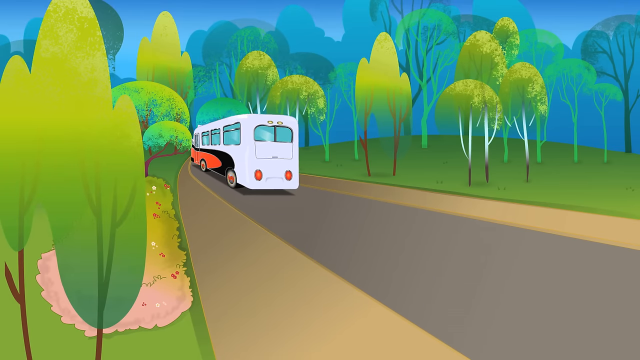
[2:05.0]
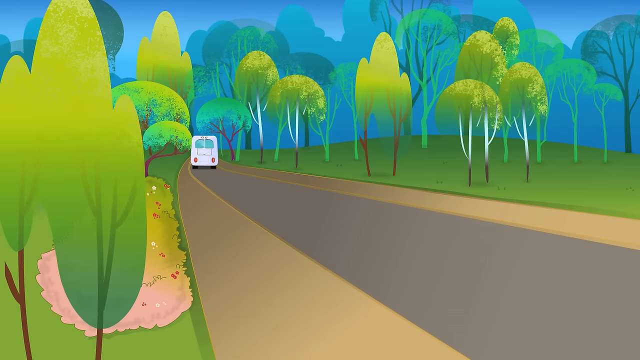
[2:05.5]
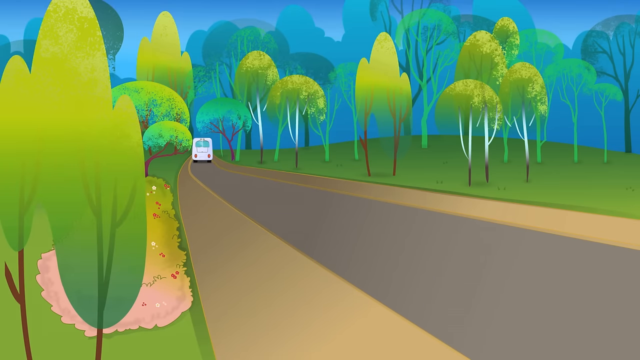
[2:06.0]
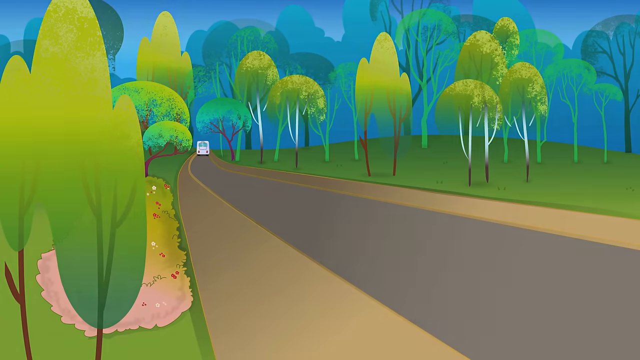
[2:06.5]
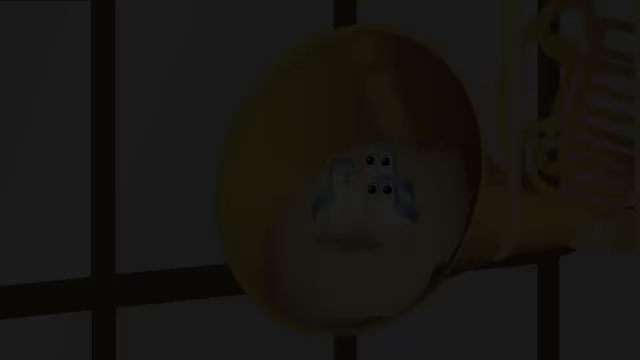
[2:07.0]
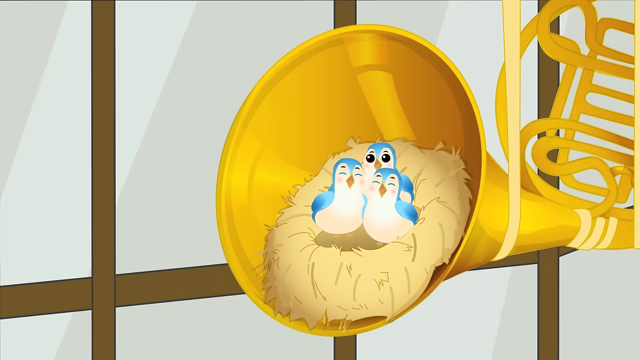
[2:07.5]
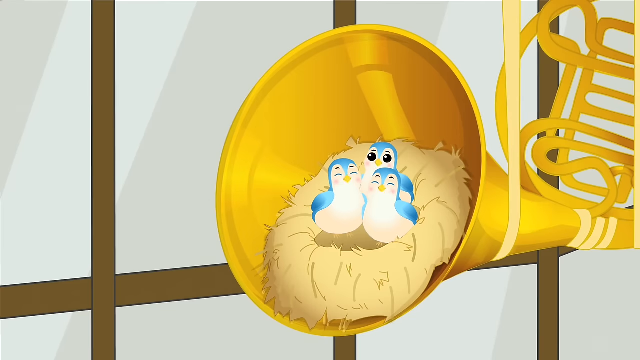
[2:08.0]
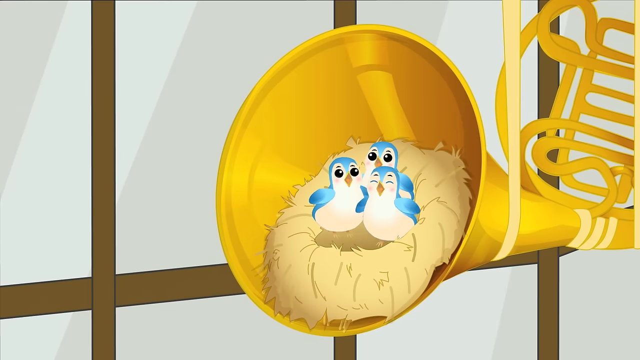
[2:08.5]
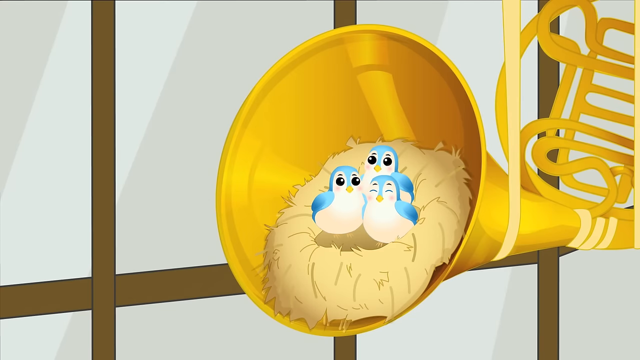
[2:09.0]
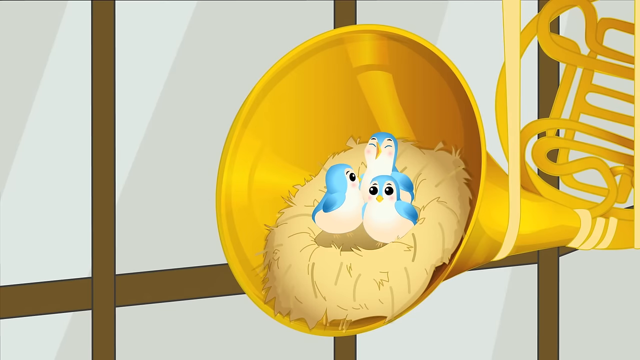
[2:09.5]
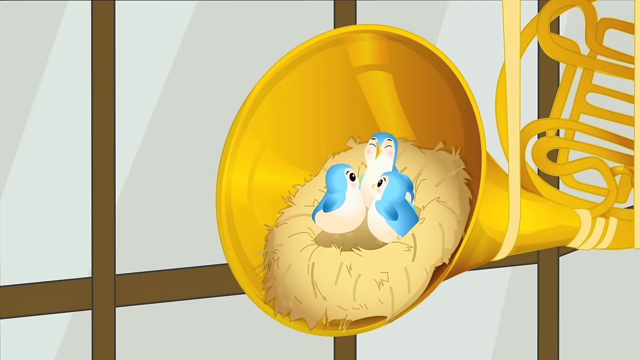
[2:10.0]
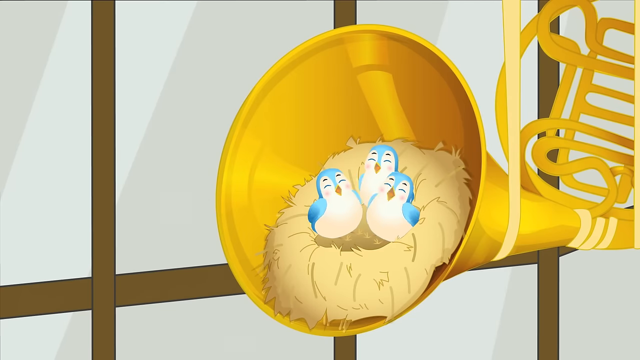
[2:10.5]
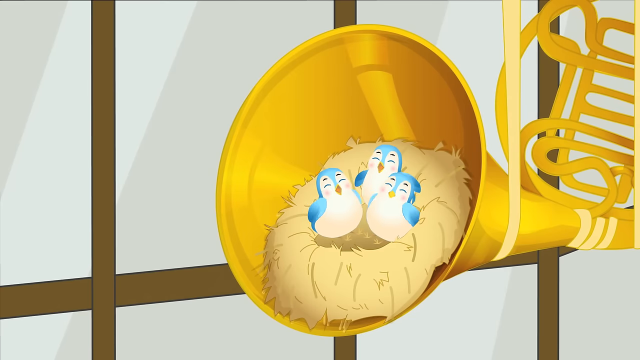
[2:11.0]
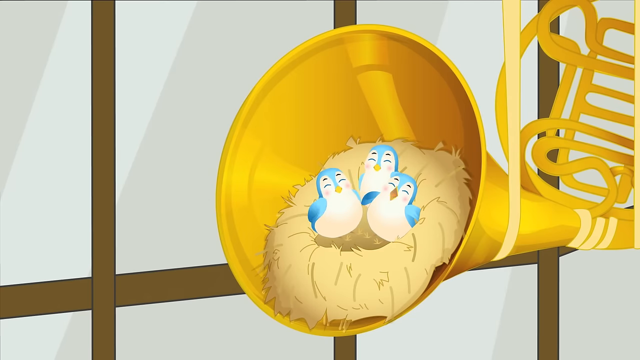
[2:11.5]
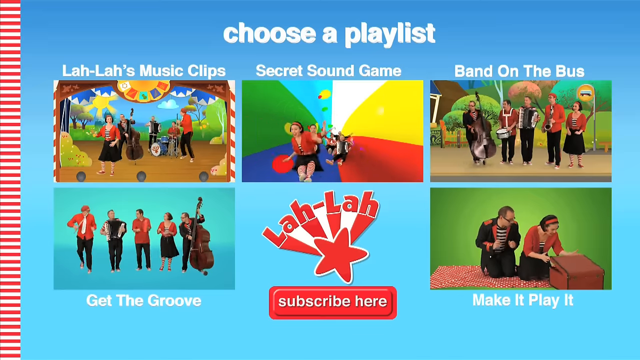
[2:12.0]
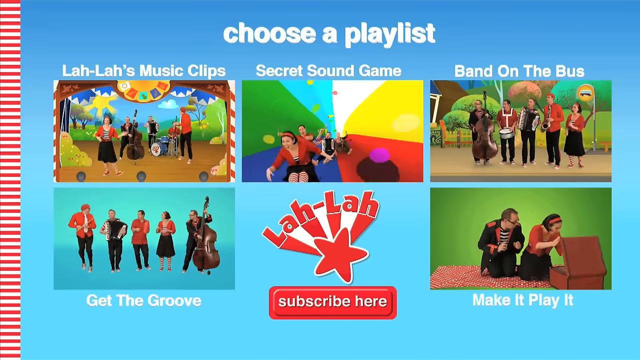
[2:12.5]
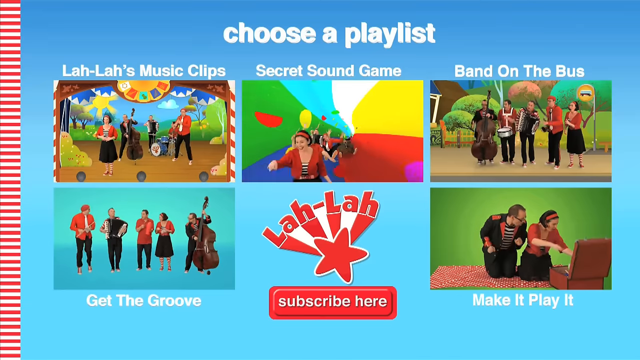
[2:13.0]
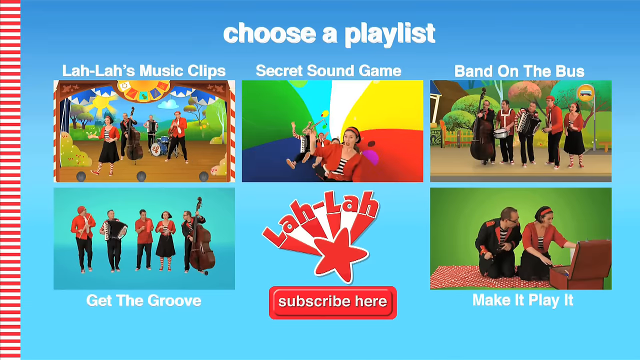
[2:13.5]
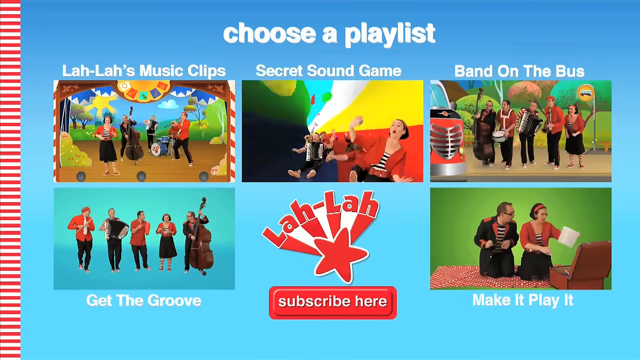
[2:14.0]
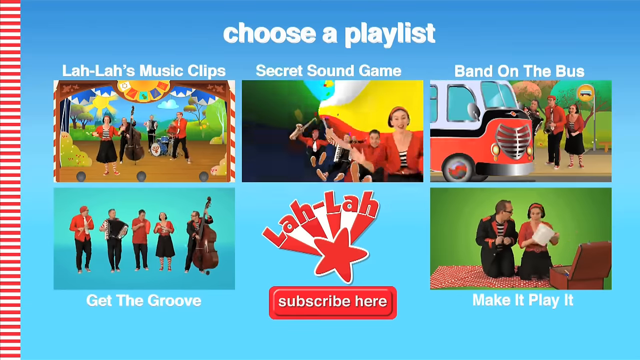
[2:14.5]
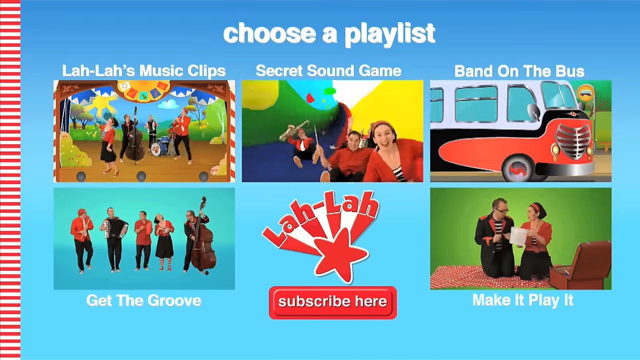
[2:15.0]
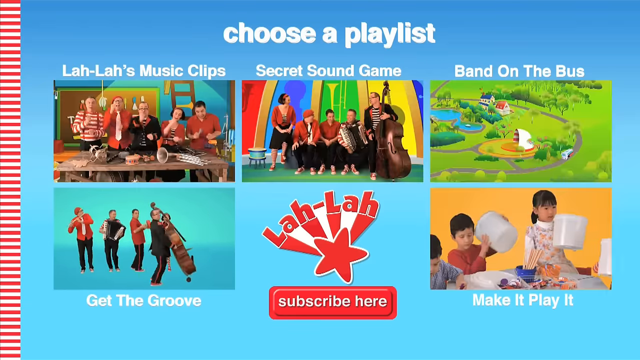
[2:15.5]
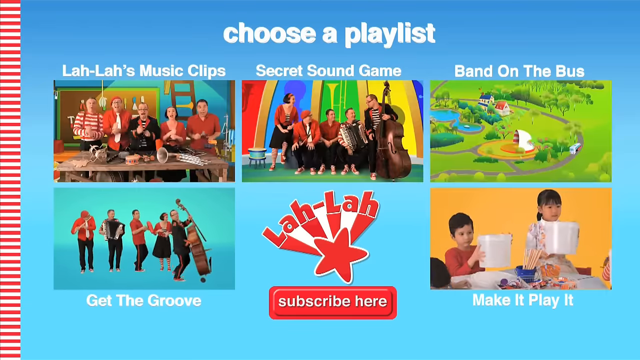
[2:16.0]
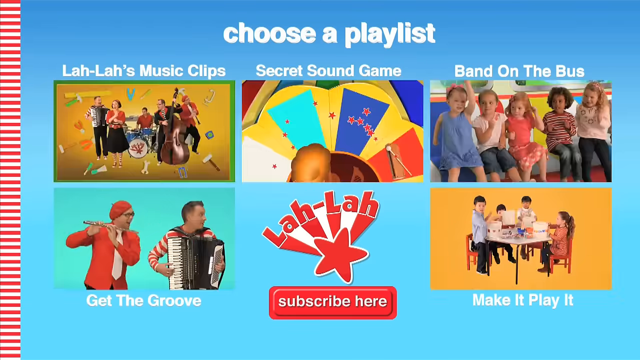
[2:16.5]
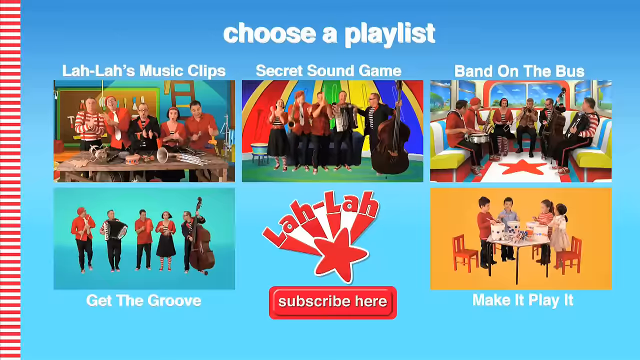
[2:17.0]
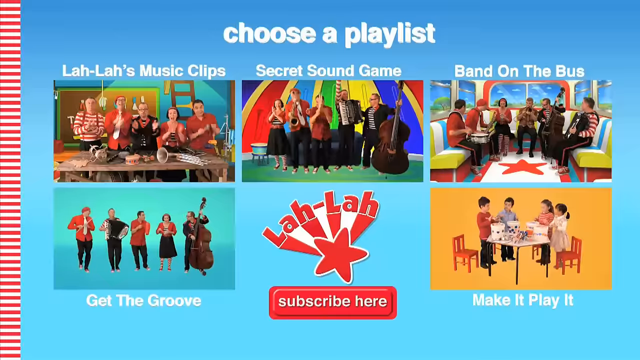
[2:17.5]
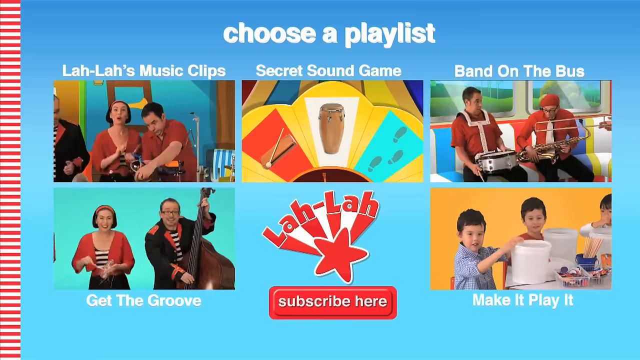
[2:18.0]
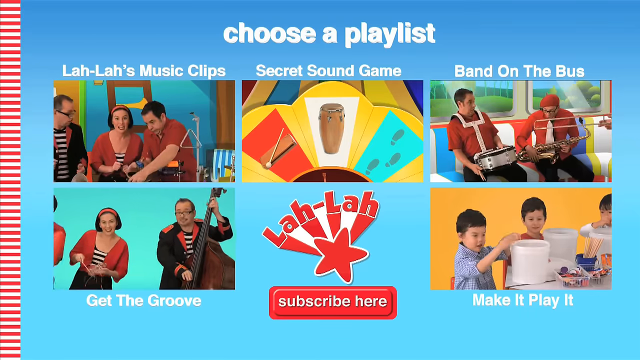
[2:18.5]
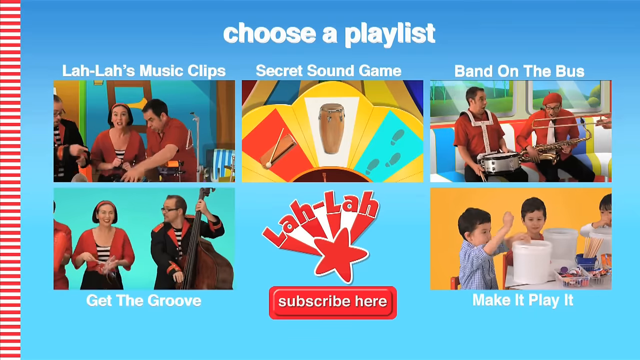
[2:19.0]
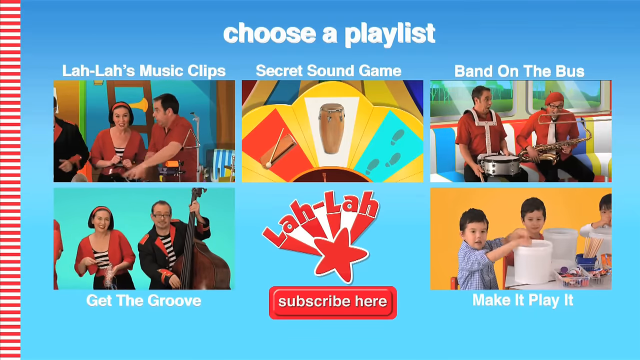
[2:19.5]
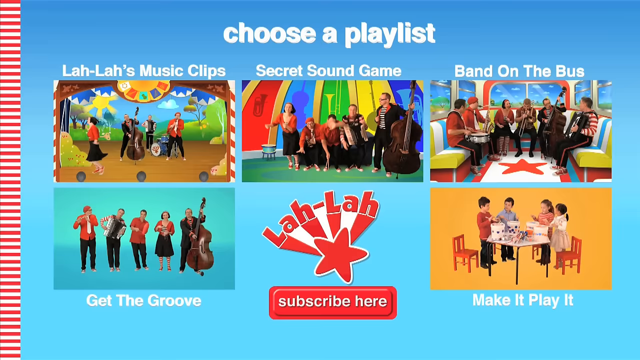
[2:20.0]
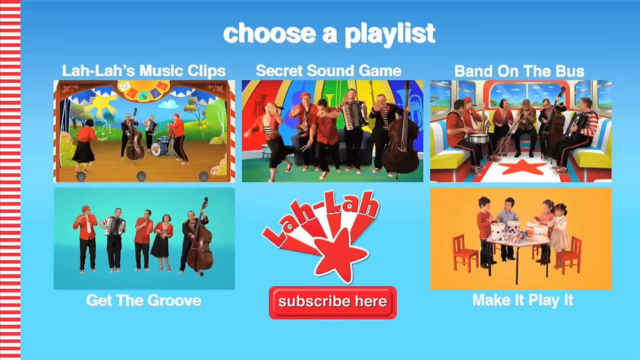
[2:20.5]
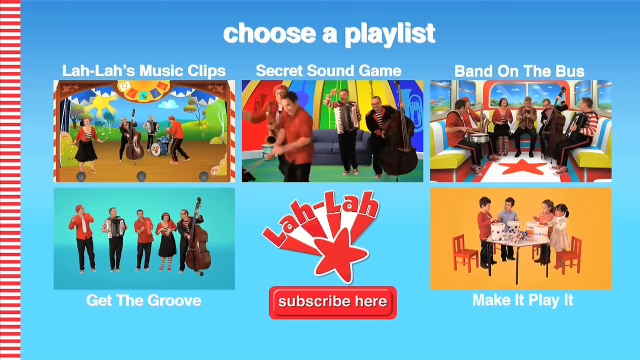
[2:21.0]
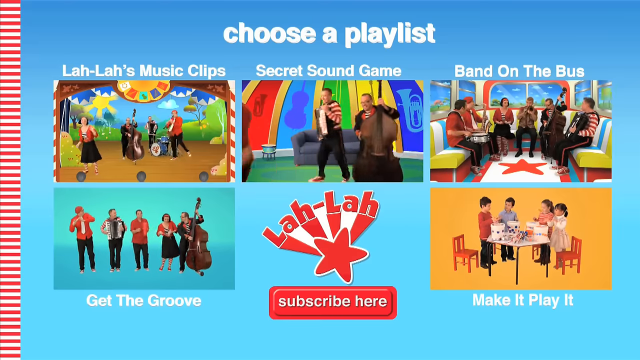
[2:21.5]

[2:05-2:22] The bus drives off into the distance, and then what looks like a French horn appears with a nest inside its horn holding three blue and white birds. The birds move and seem to chirp. Text reads "choose a playlist", and underneath are six small moving clips, three on the top row and three on the bottom row, labeled "Lala's musical clip", "secret sound game", "band on the bus", "get the groove", "subscribe here" and "make it and play it". The band members look like normal live people who are always set in an animated environment rather than a real-life background.